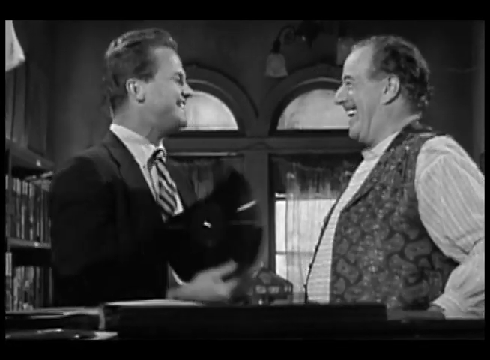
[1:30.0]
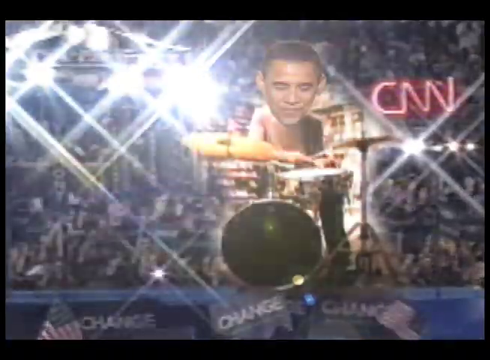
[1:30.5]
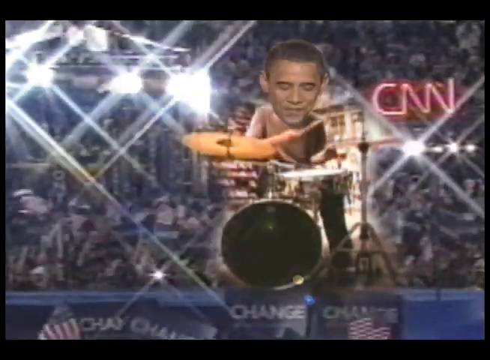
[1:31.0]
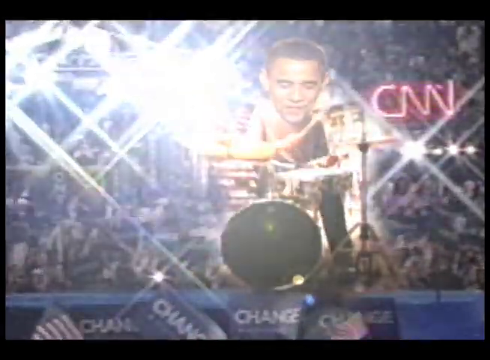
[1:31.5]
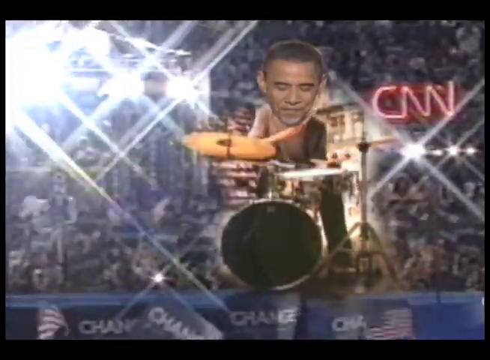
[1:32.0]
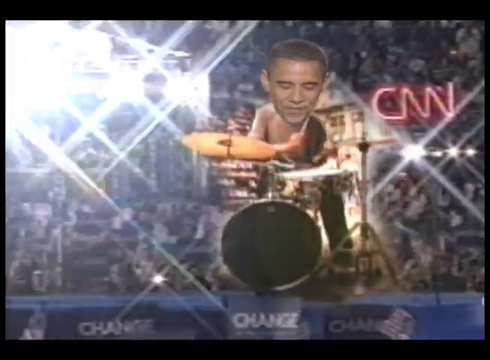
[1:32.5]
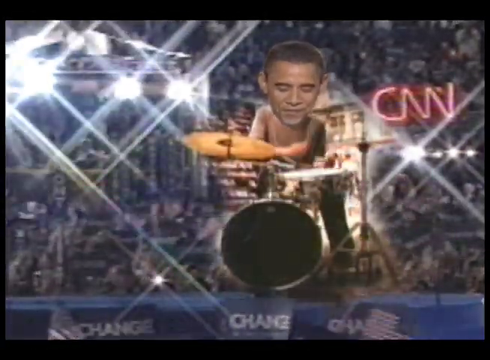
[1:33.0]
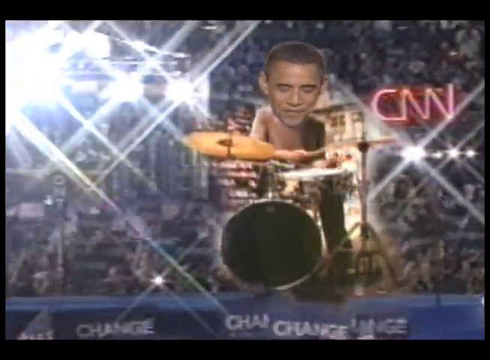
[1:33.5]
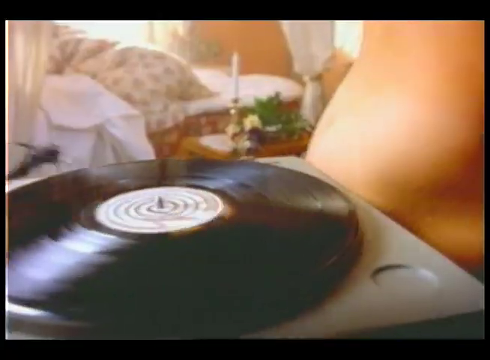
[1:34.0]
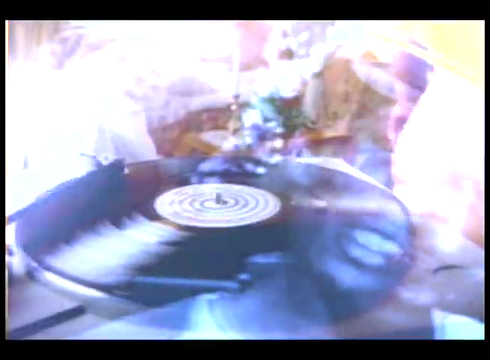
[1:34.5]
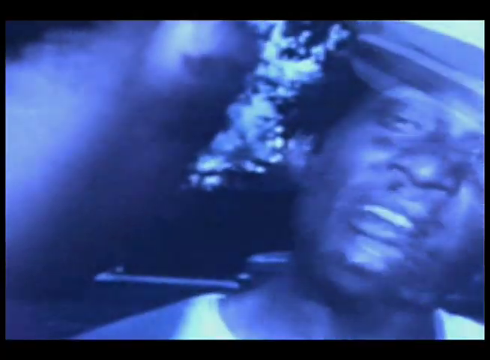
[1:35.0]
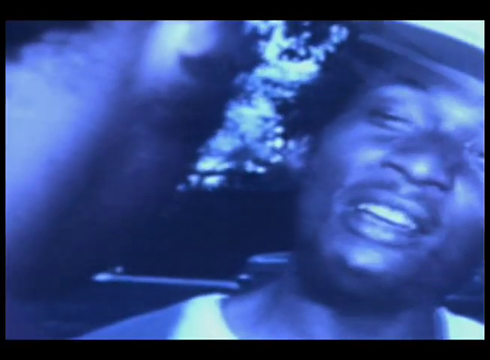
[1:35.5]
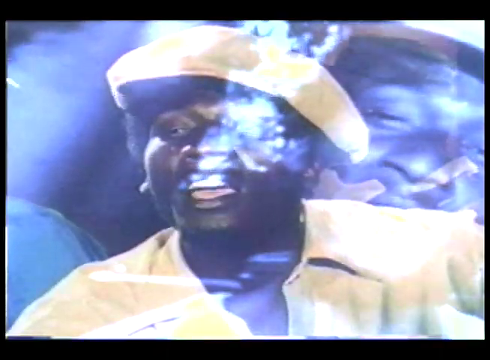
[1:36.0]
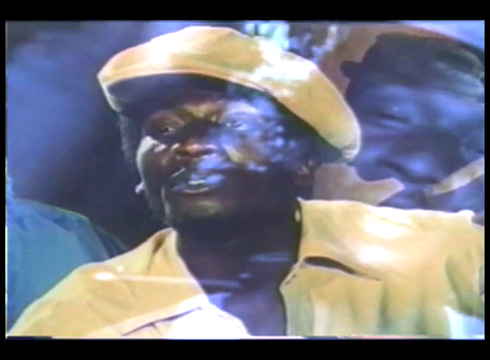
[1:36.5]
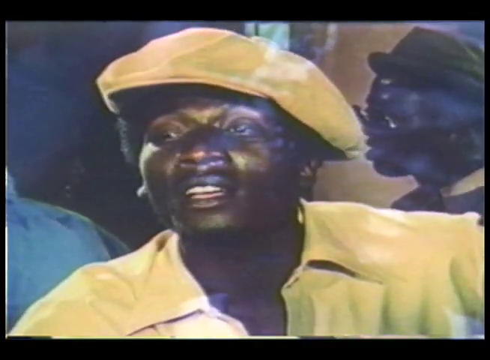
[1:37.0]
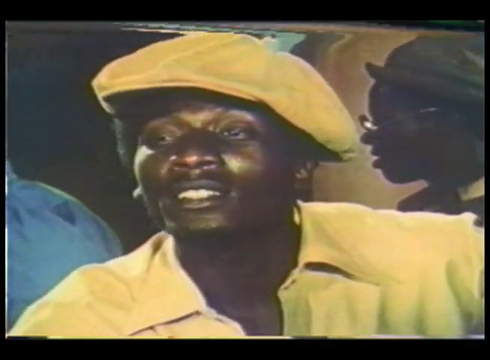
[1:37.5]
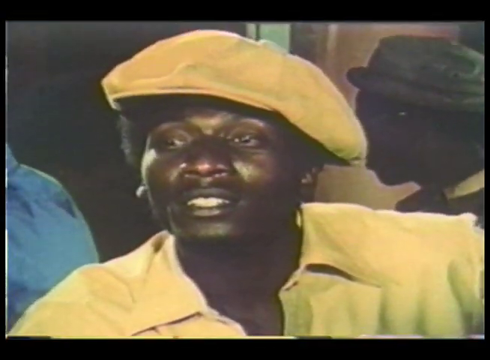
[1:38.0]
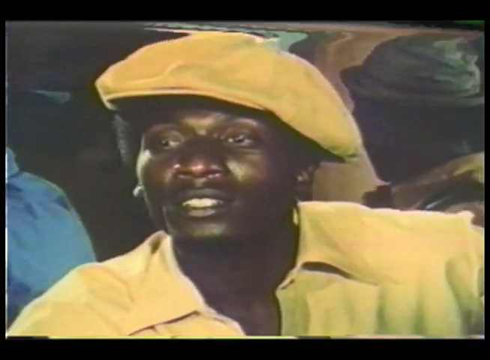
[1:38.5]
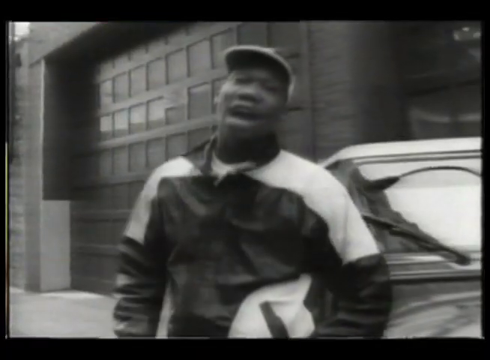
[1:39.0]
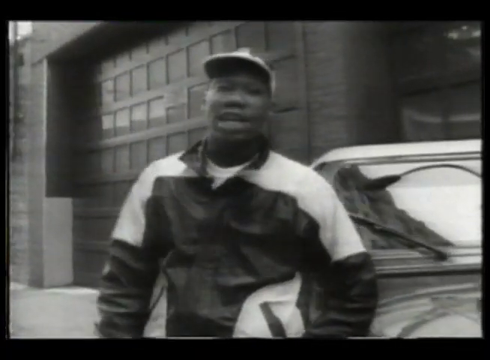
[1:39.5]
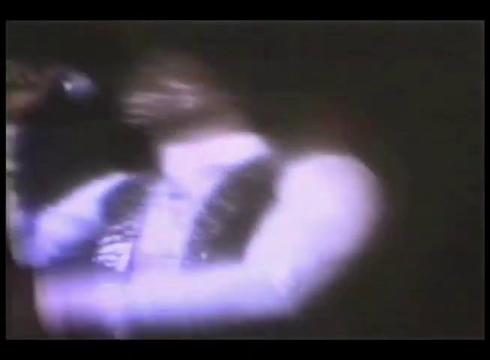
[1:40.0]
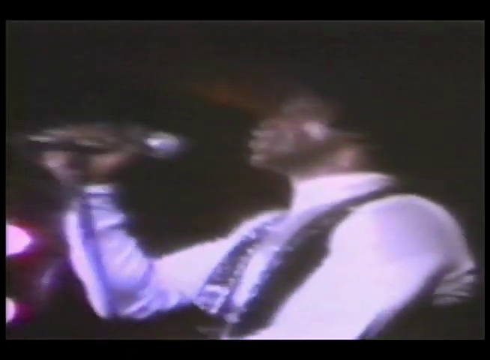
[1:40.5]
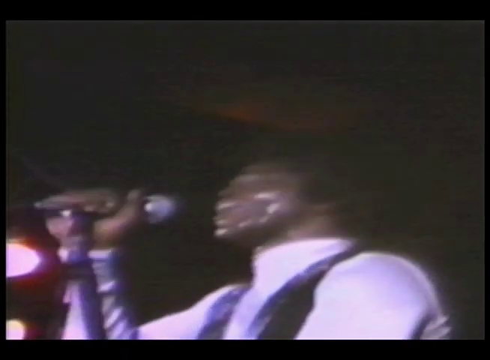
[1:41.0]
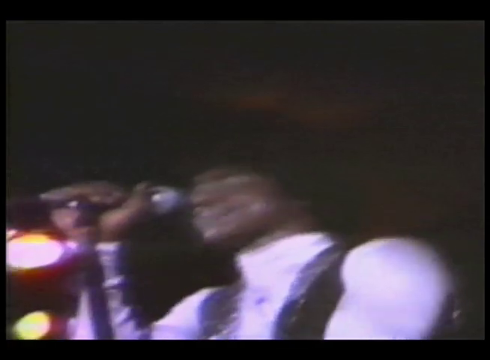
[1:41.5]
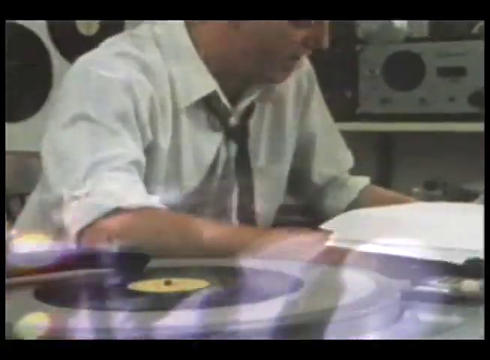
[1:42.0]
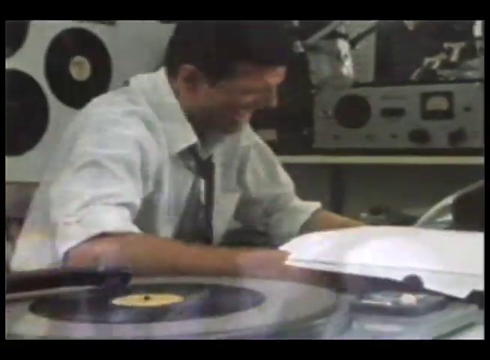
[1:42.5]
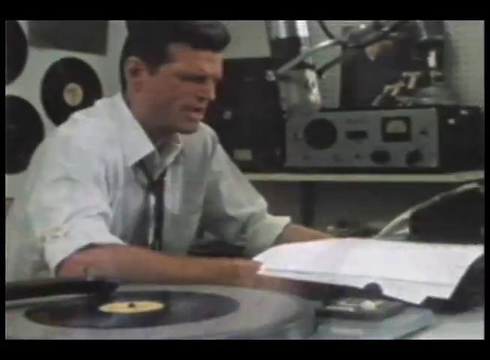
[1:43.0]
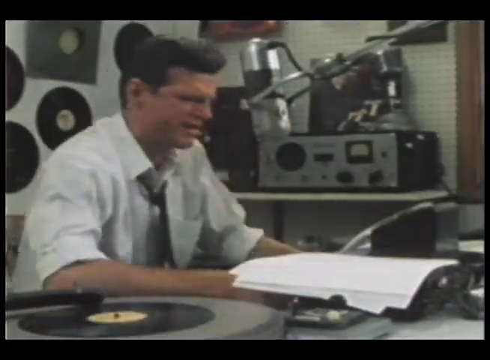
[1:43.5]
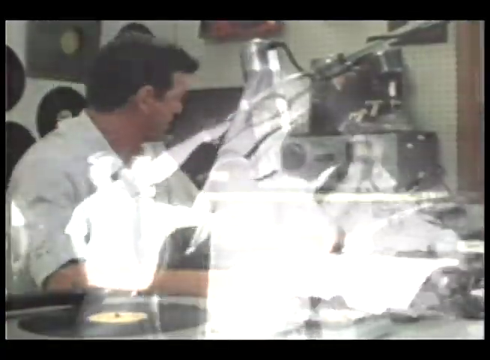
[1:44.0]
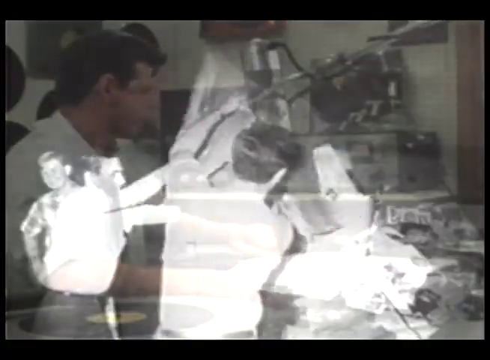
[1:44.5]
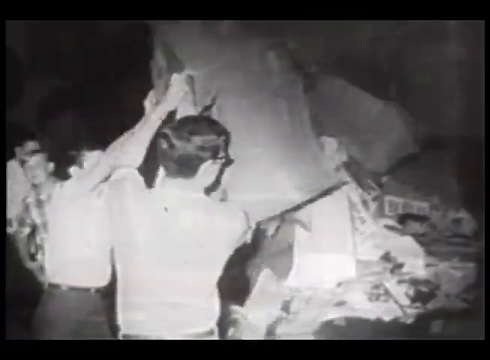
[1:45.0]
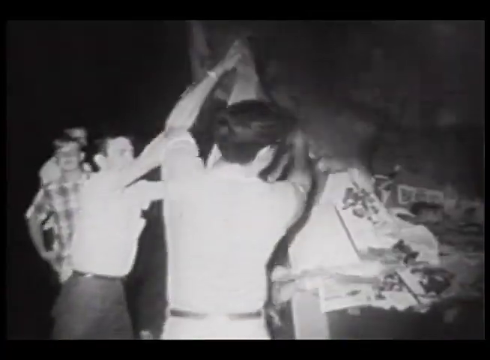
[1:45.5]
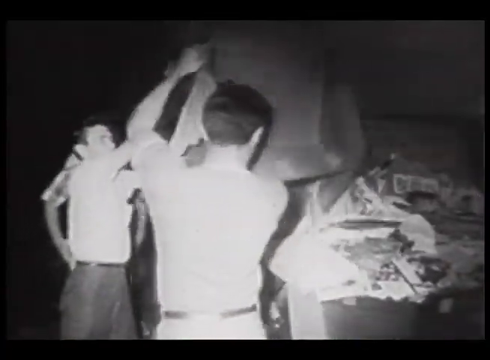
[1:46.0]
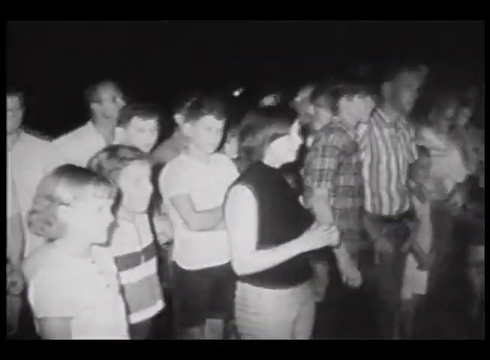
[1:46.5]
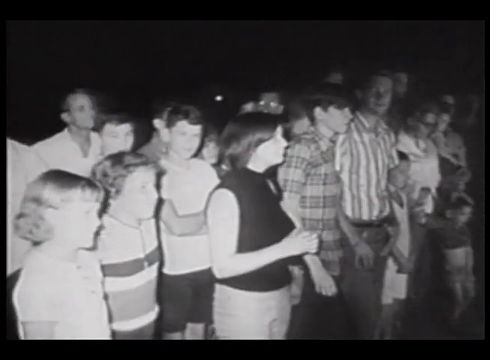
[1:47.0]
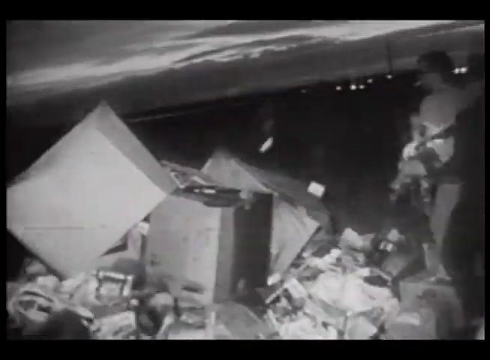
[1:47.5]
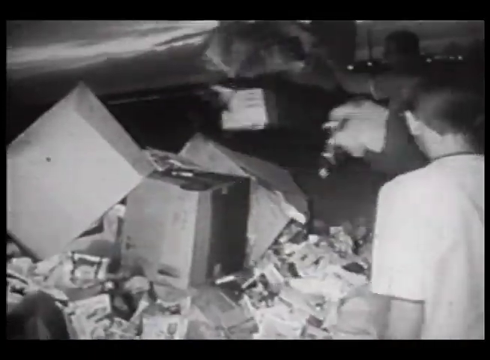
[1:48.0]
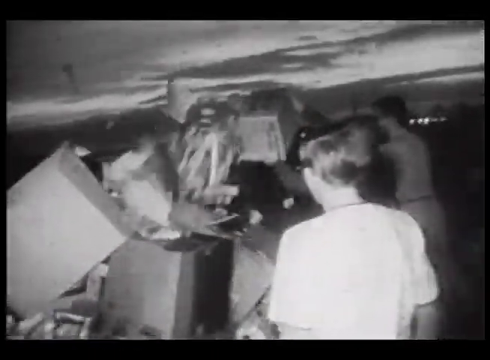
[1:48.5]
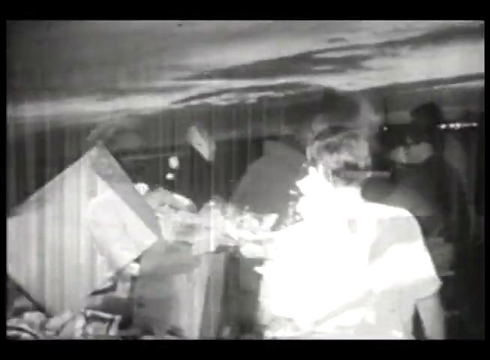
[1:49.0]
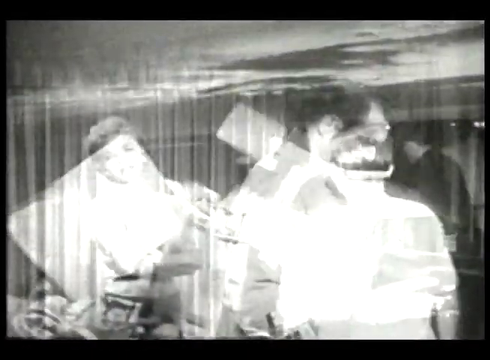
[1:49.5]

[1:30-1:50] The video starts with the man breaking the record, then goes back to the fake Obama, the superimposed Obama head on the drummer, on the Democratic National Convention stage with the crowd in the background, playing the drums. After that, a record player is shown, kind of jiggling around, with the disc turning. The video then cuts to clips of three different Black entertainers: one is James Brown, one looks like a rapper, and one looks like he might be a talk show host or someone just looking at the camera. A DJ in a booth appears to be jamming to music, followed by a black-and-white clip of a crowd of people throwing garbage and apparently burning it. The video then returns to the person breaking the record and to Obama on the stage, going very quickly from one clip to the next.